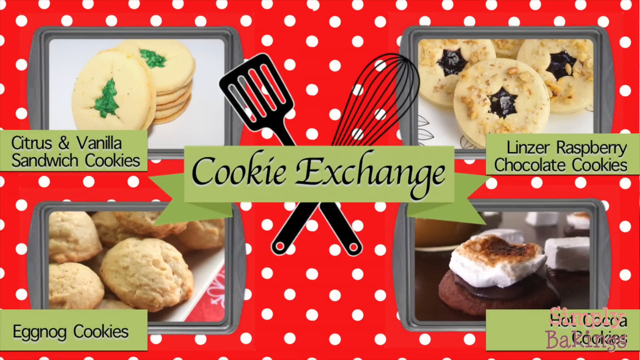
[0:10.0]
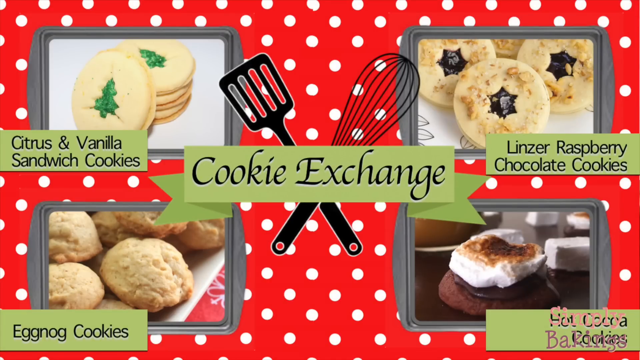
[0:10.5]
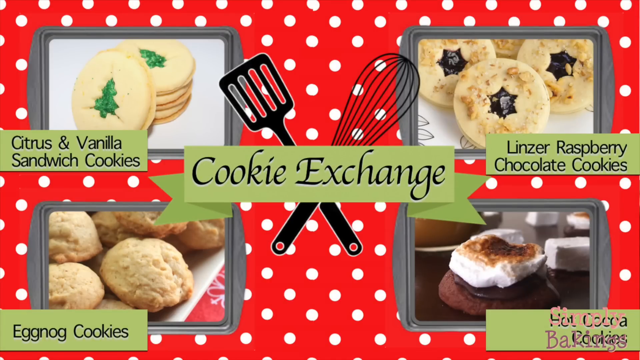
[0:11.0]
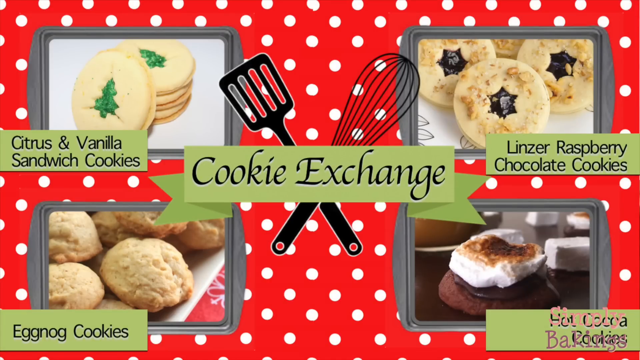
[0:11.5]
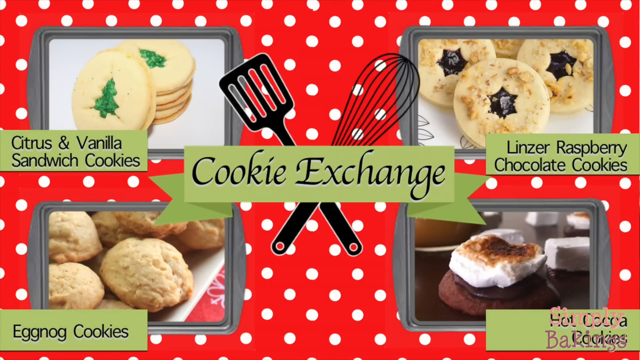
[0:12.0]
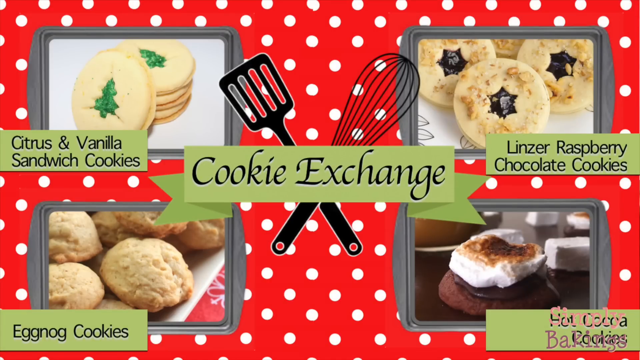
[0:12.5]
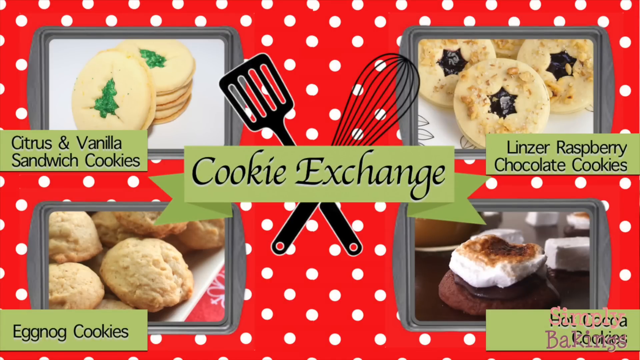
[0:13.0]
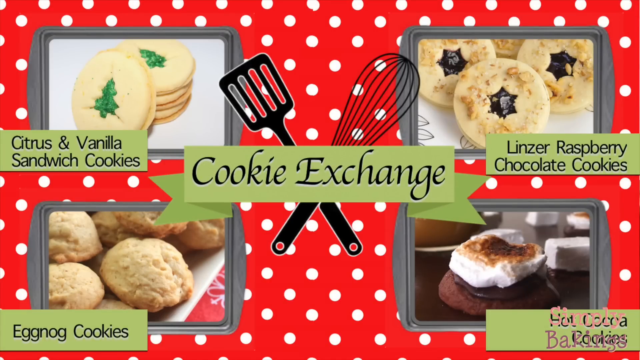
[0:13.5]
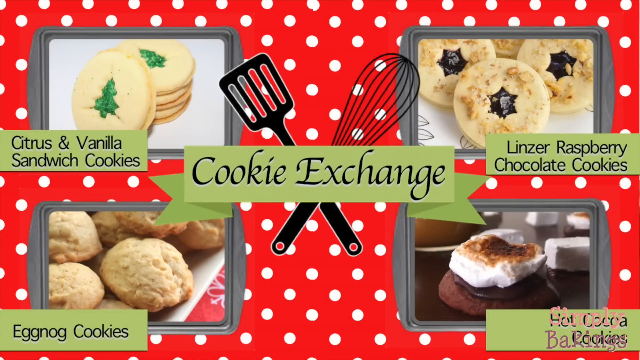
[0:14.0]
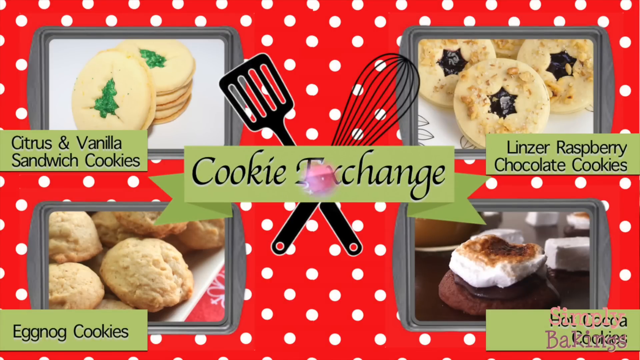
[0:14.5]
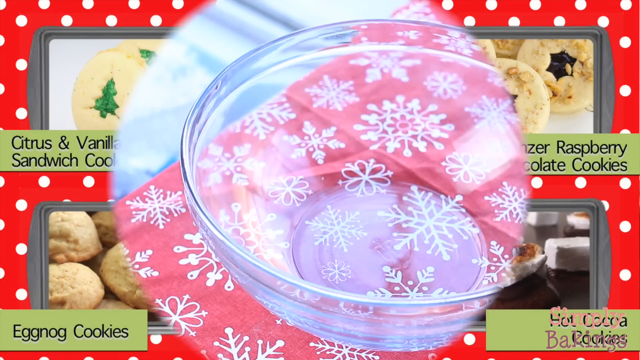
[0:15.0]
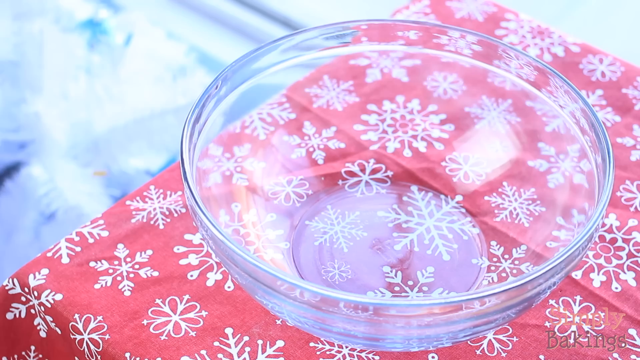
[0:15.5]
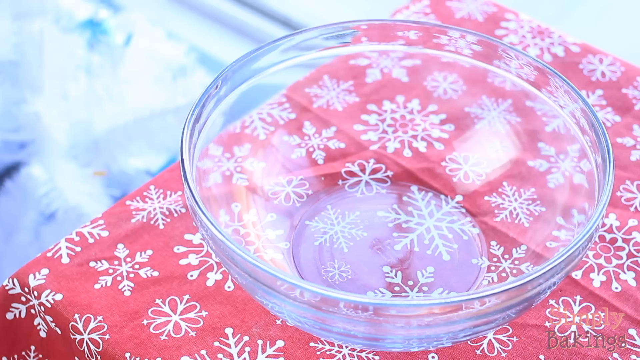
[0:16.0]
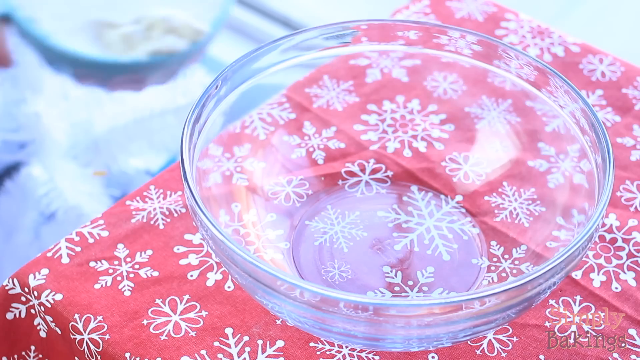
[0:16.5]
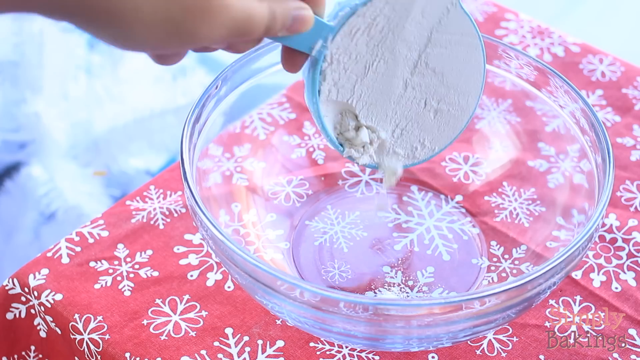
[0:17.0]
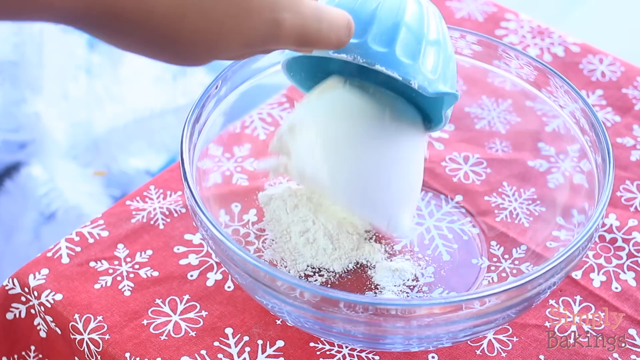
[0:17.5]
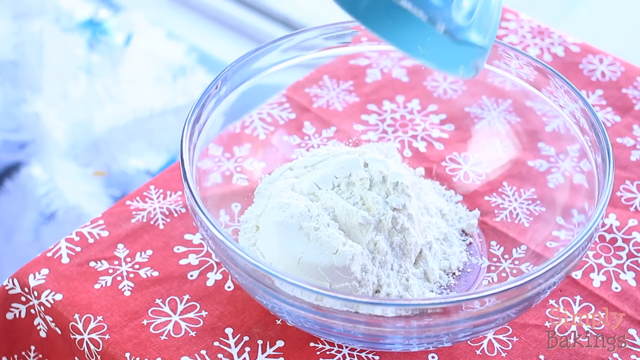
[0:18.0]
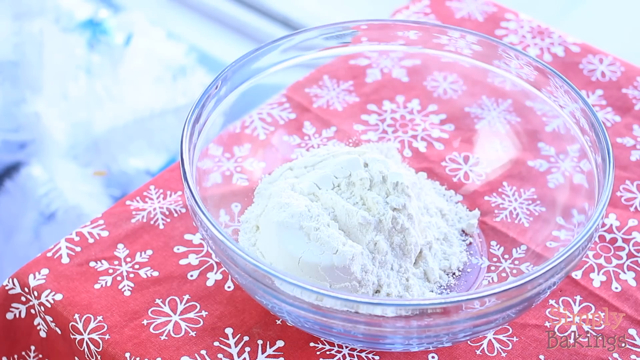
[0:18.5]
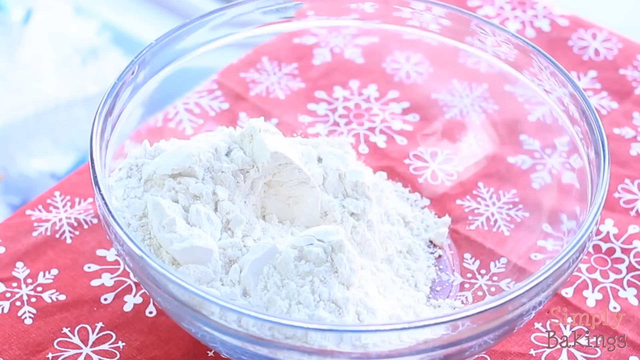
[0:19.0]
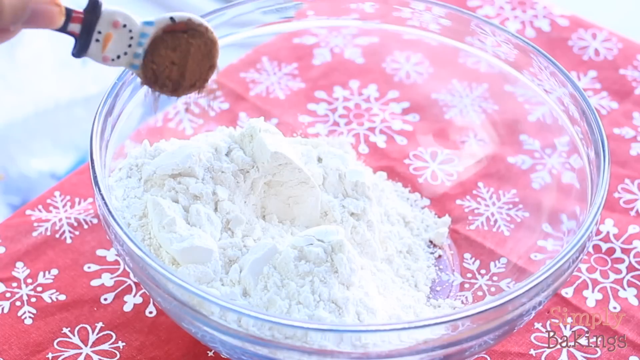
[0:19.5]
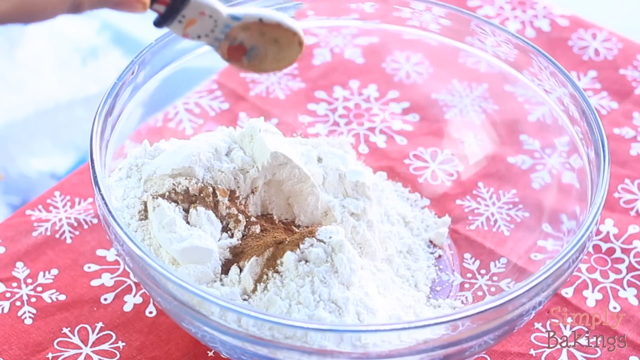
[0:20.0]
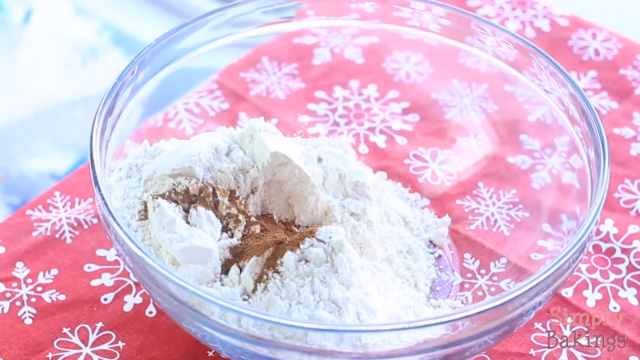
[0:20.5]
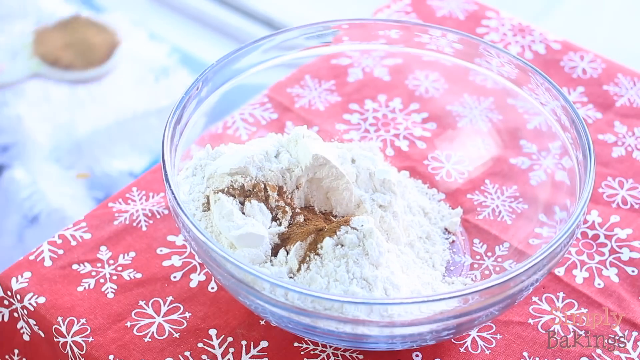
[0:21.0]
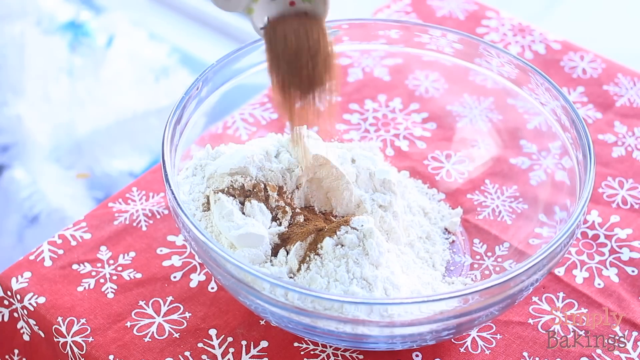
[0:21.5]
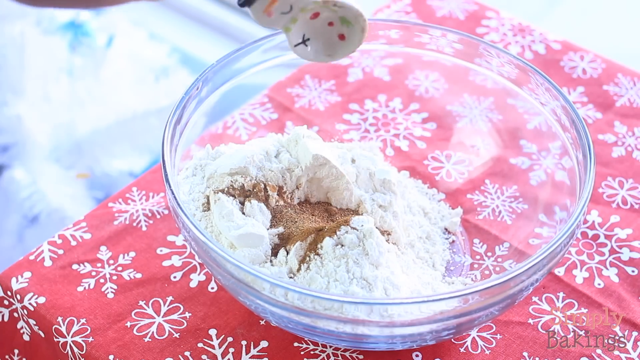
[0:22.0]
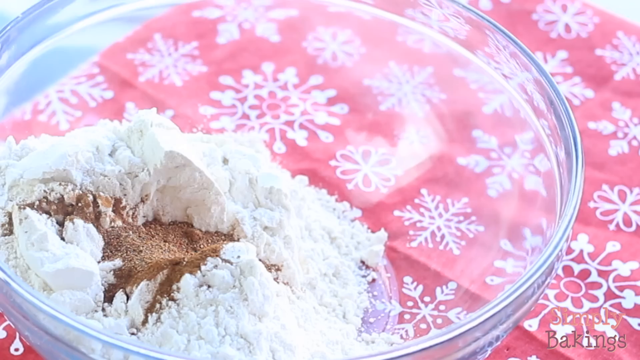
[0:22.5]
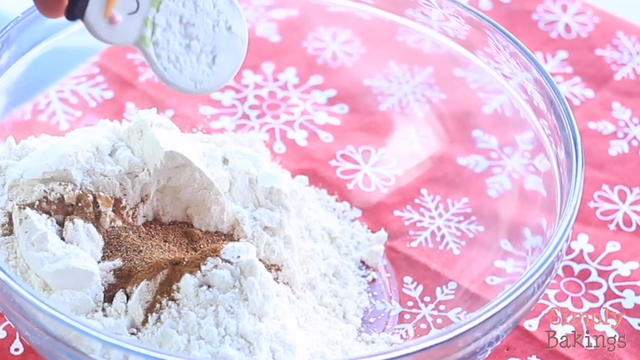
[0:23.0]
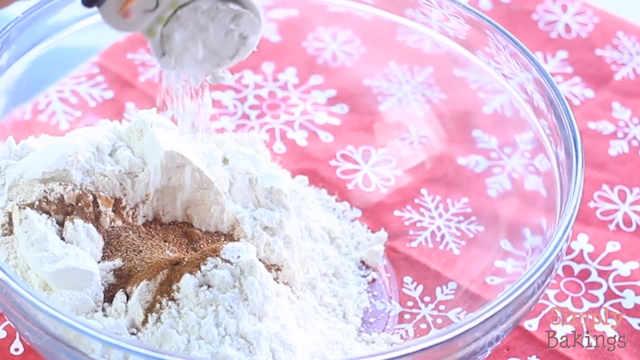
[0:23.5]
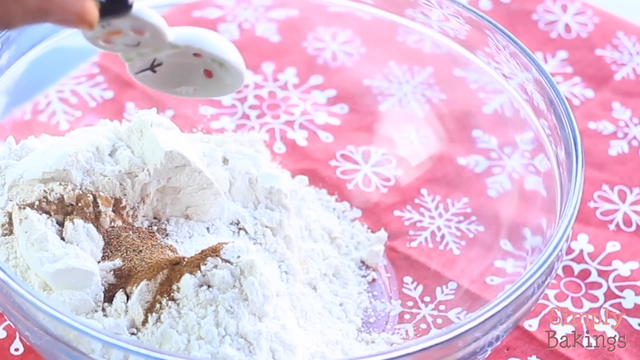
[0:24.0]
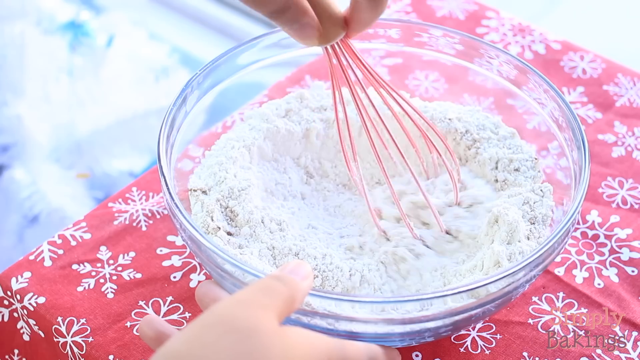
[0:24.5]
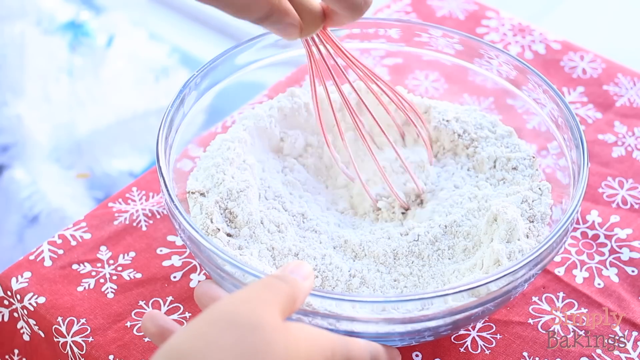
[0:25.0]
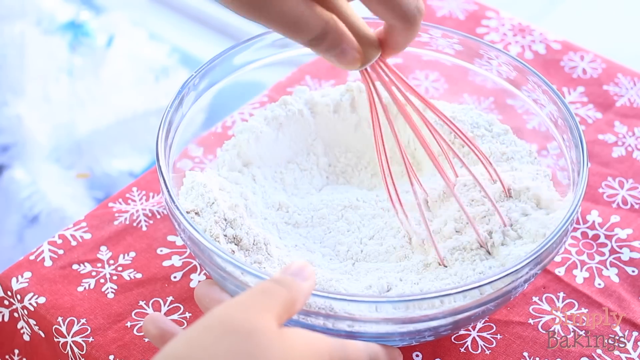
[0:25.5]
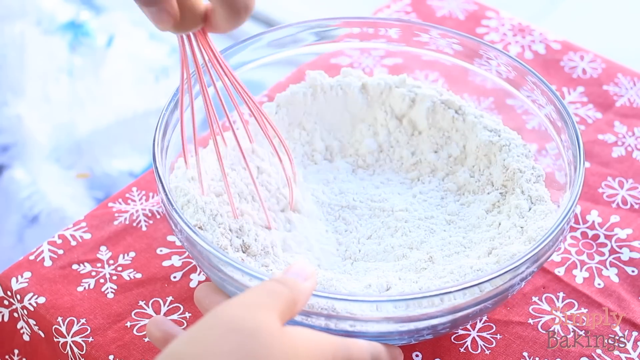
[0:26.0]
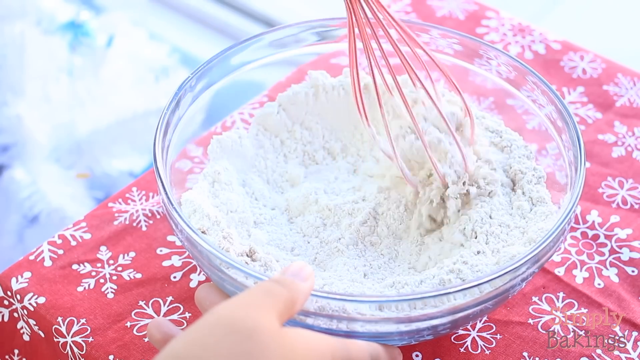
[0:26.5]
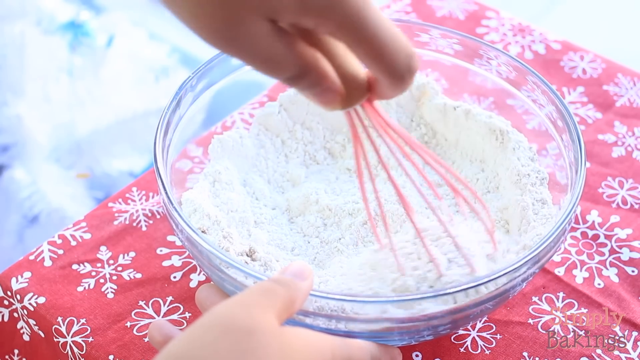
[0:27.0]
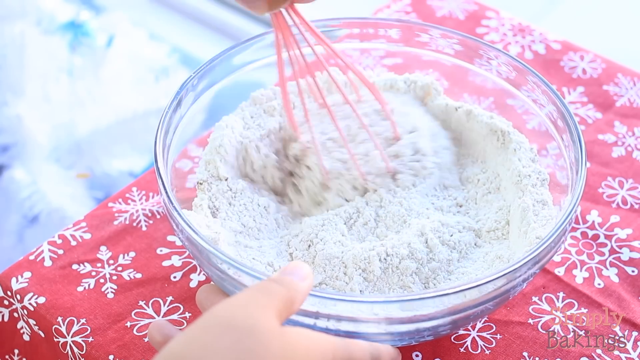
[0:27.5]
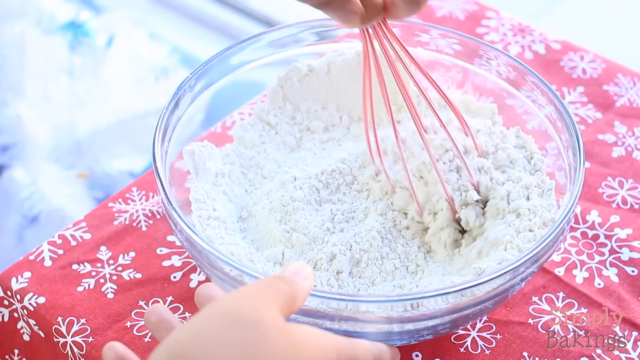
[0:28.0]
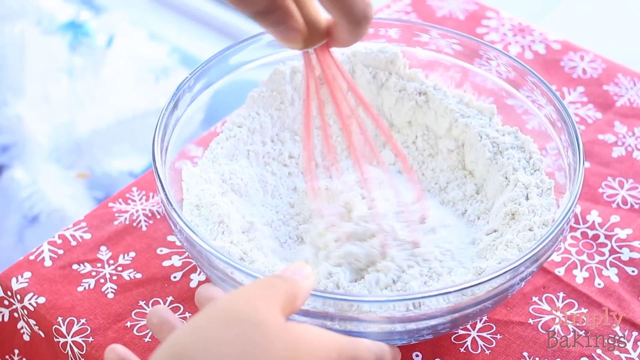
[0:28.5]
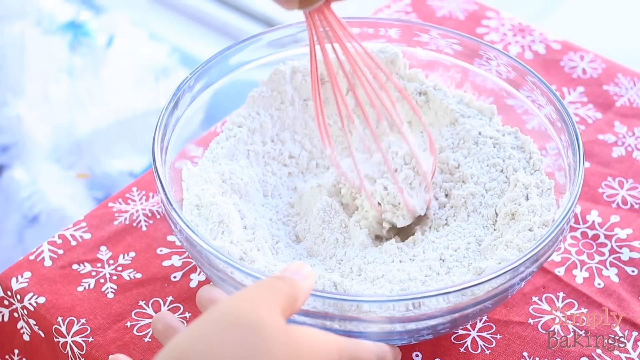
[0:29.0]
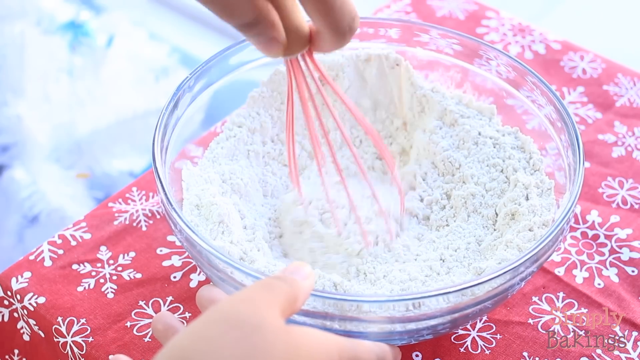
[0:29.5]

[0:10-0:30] A photo of a cookie exchange shows examples of different cookies, set against a holiday-themed red and white polka-dotted background. The cookies include citrus and vanilla sandwich cookies, linzer raspberry chocolate cookies, eggnog cookies, and a hot cocoa variety. The cookie exchange also has a little label with a picture of a spatula and a whisk, and shows an X shape. The video then moves on to making a batch of cookies. A clear glass bowl is on top of the holiday snowflake cloth. A person puts a cup of sugar into it, then some extra different seasonings with a measuring spoon, and then whisks the ingredients together with a pink whisk.